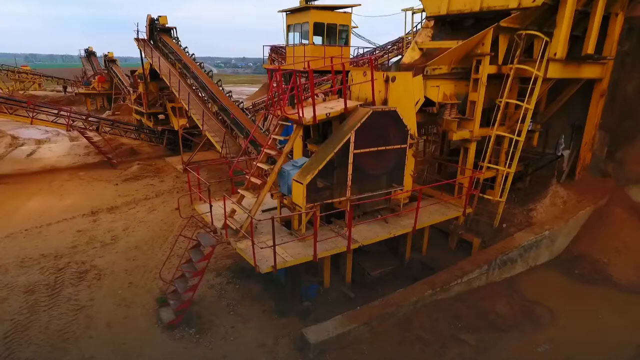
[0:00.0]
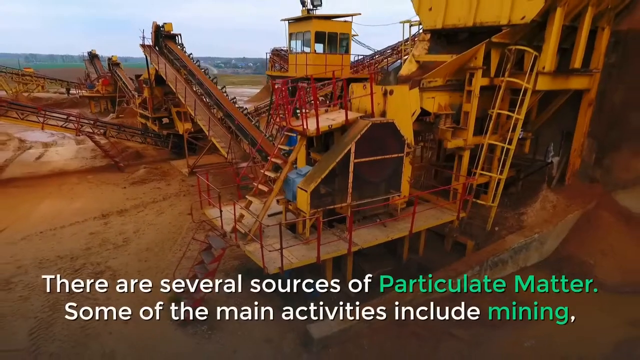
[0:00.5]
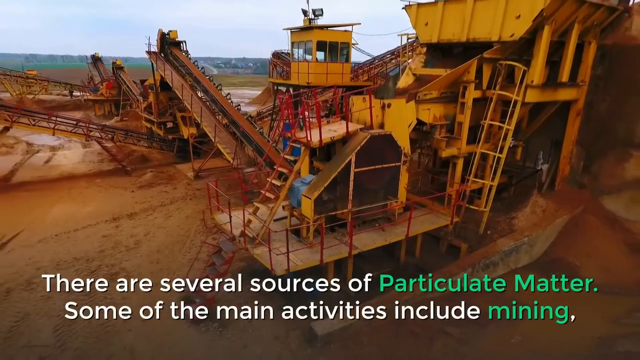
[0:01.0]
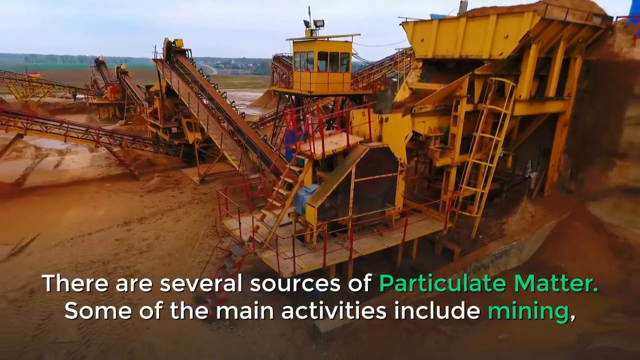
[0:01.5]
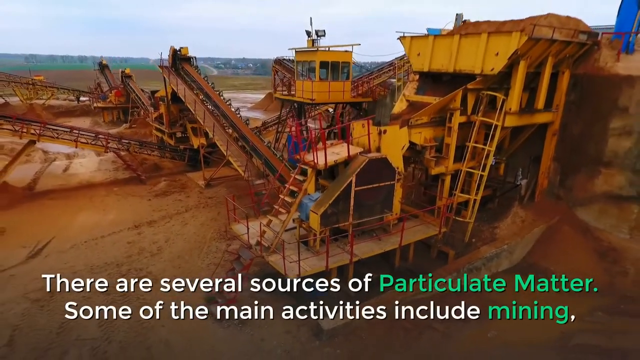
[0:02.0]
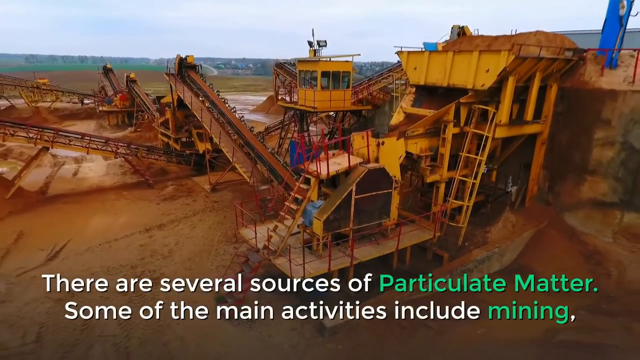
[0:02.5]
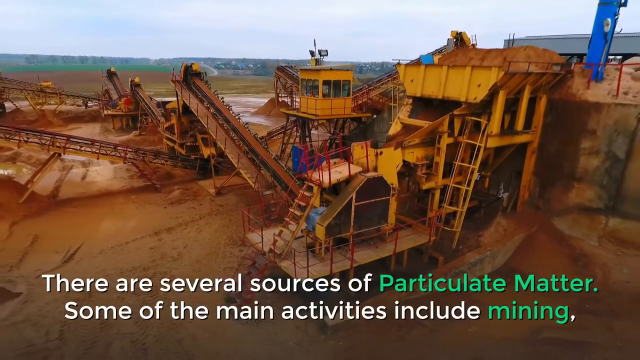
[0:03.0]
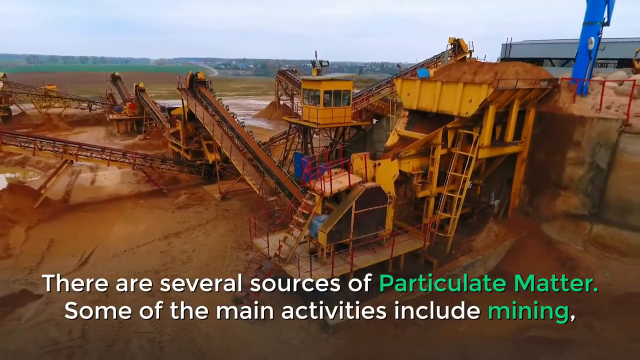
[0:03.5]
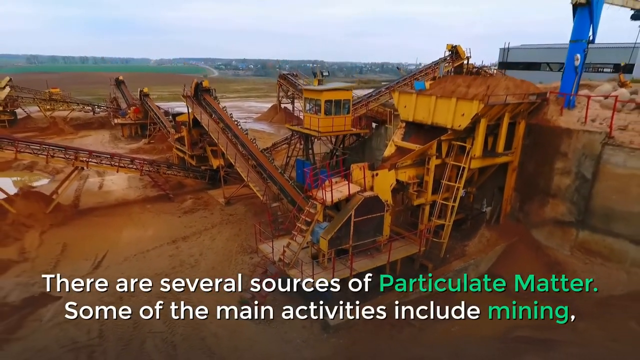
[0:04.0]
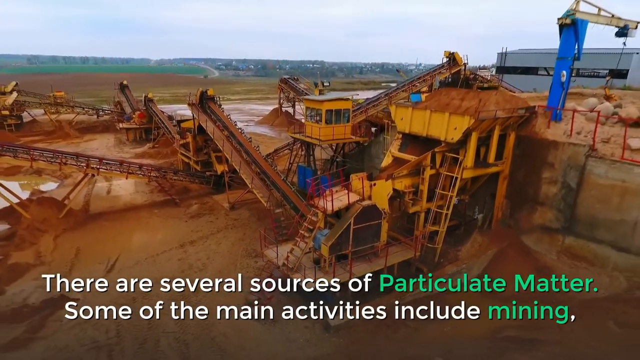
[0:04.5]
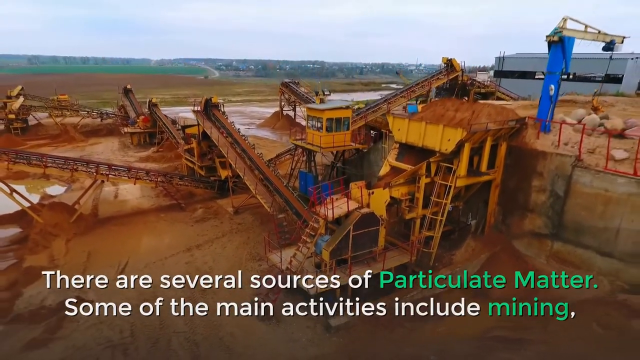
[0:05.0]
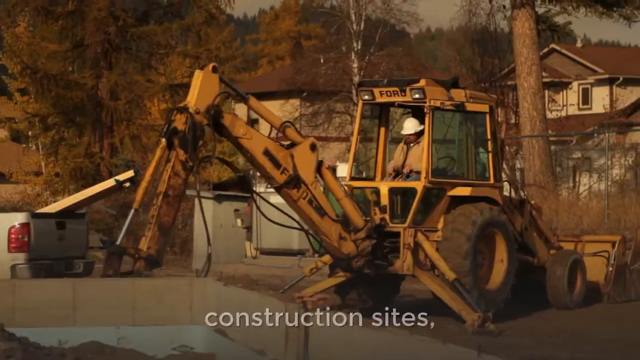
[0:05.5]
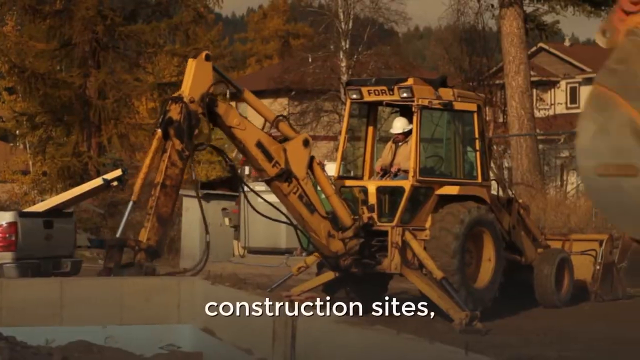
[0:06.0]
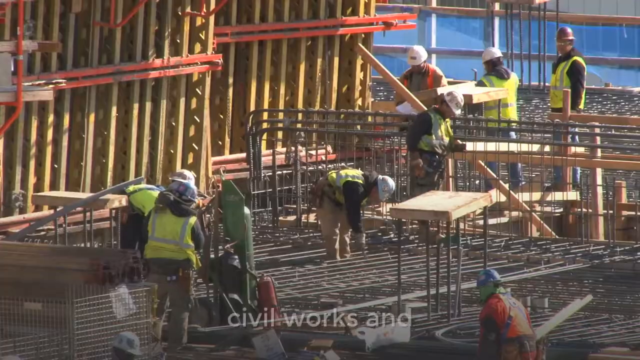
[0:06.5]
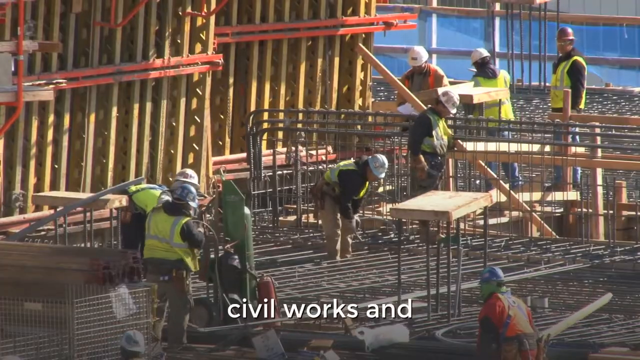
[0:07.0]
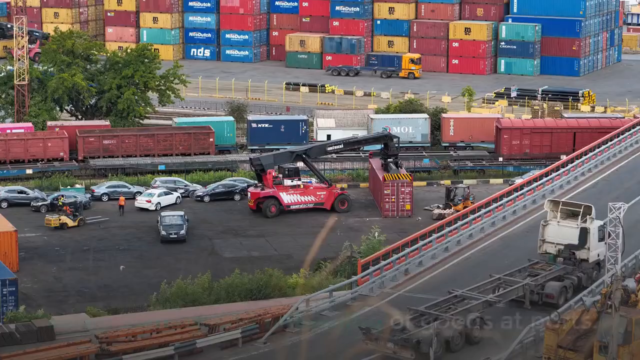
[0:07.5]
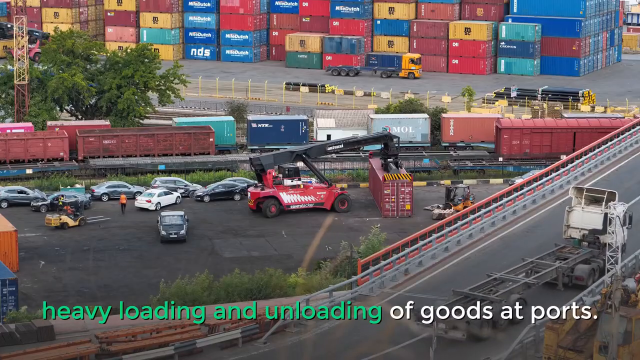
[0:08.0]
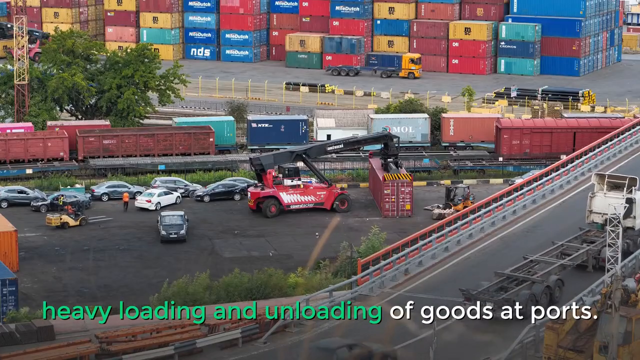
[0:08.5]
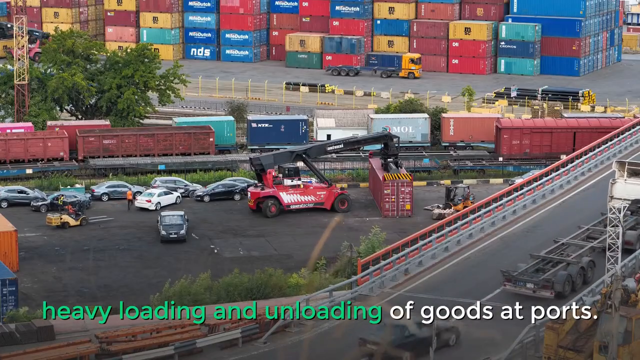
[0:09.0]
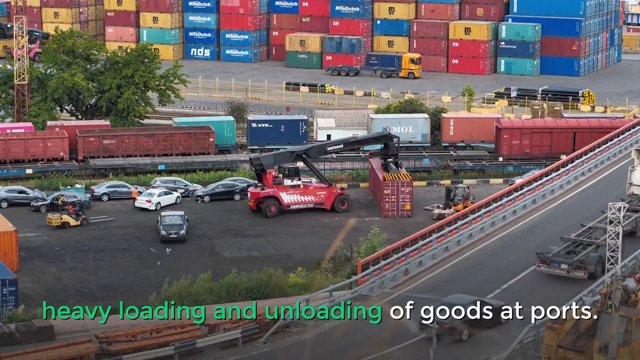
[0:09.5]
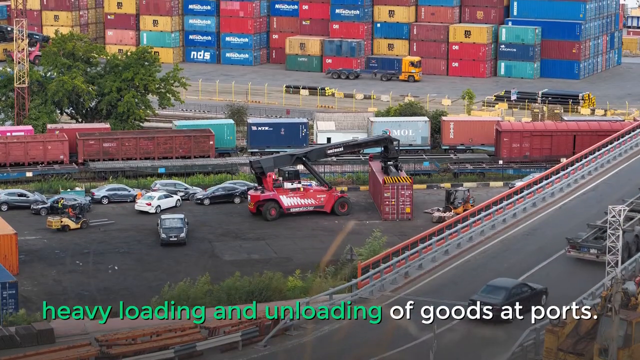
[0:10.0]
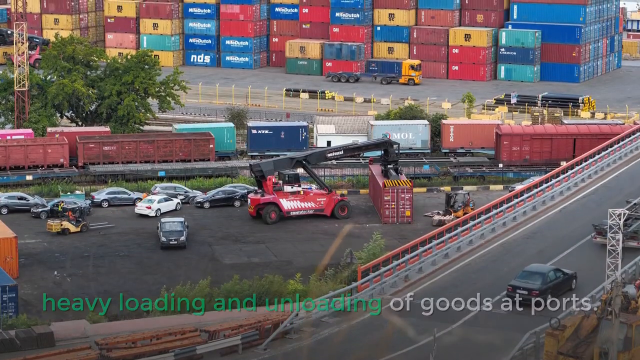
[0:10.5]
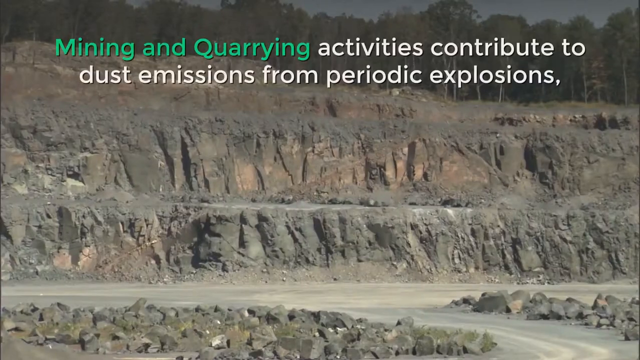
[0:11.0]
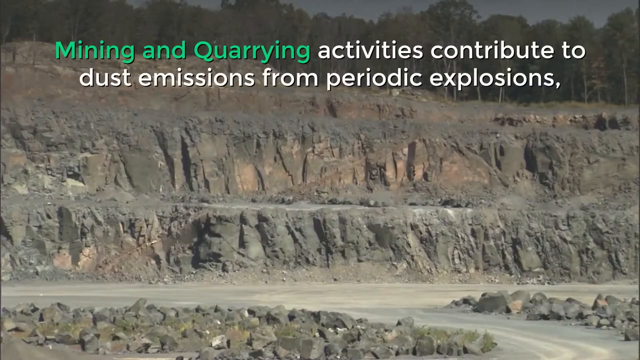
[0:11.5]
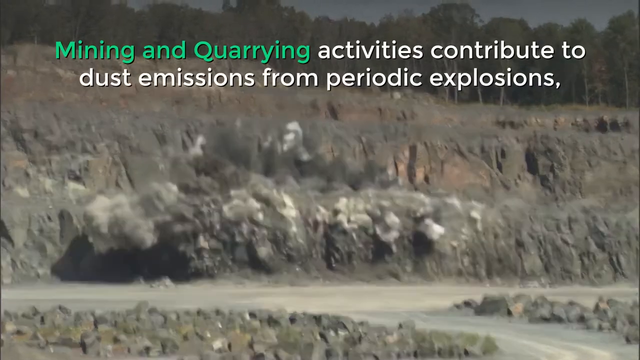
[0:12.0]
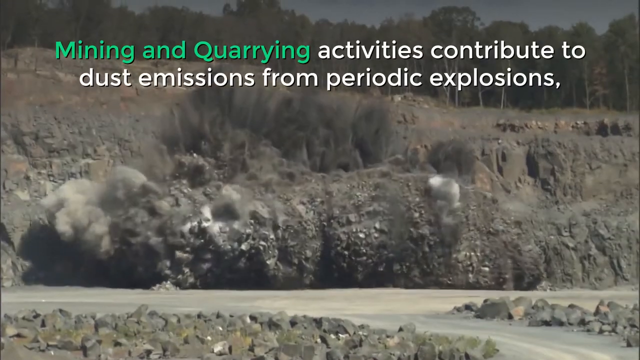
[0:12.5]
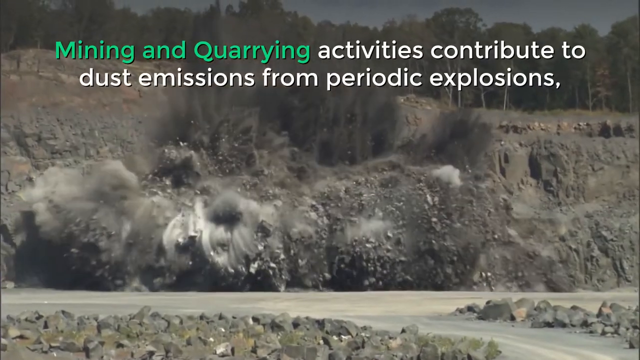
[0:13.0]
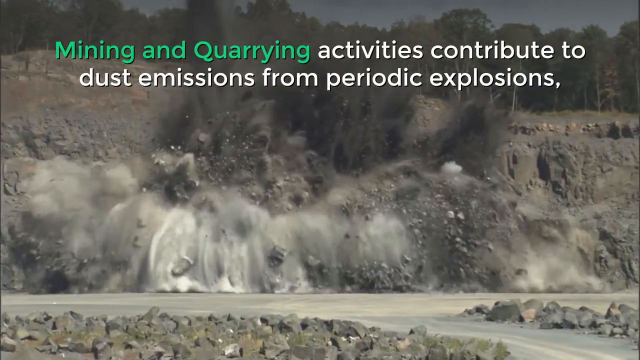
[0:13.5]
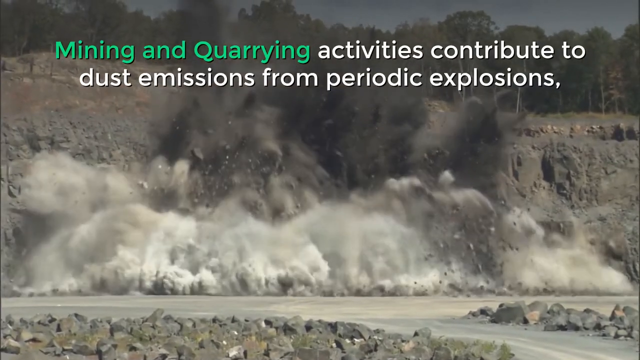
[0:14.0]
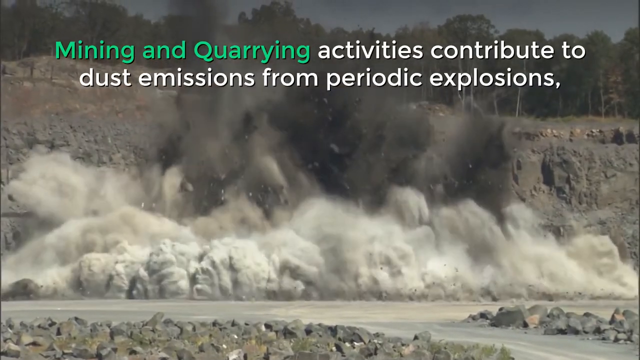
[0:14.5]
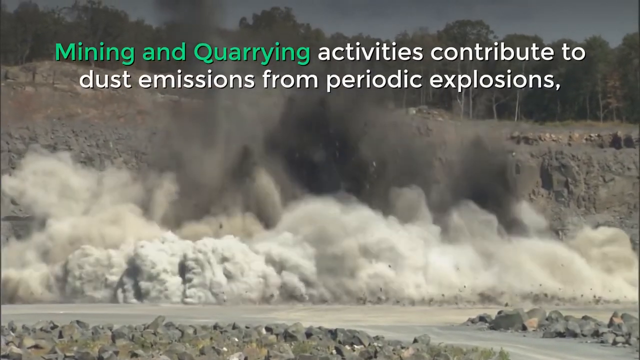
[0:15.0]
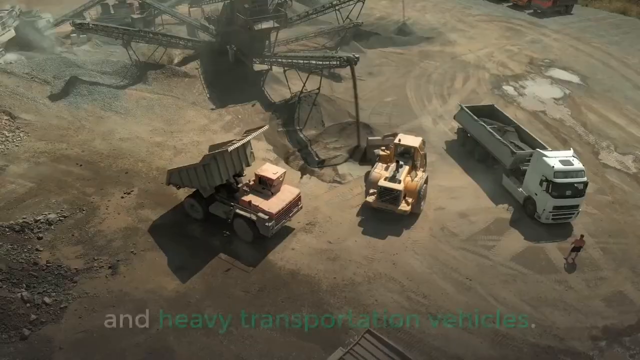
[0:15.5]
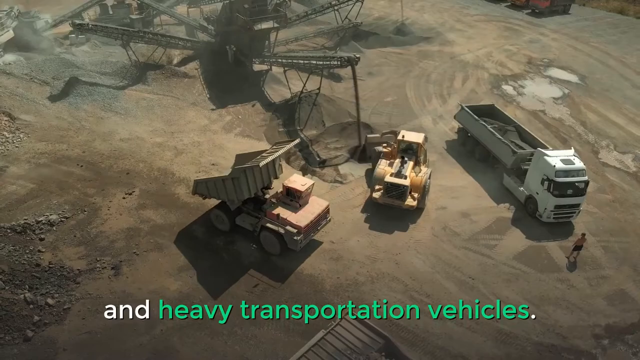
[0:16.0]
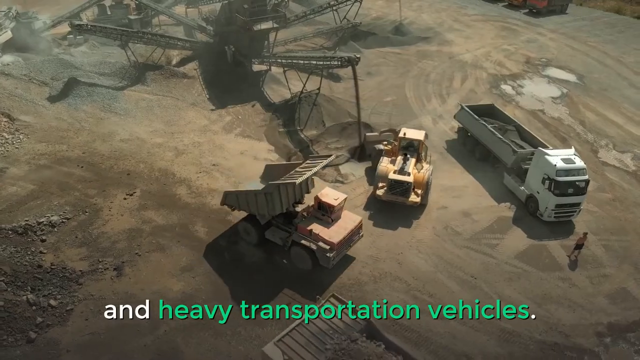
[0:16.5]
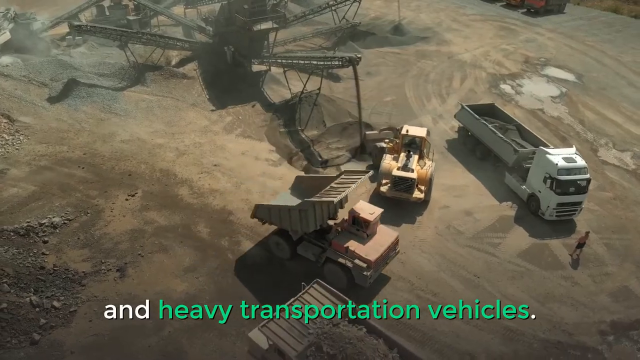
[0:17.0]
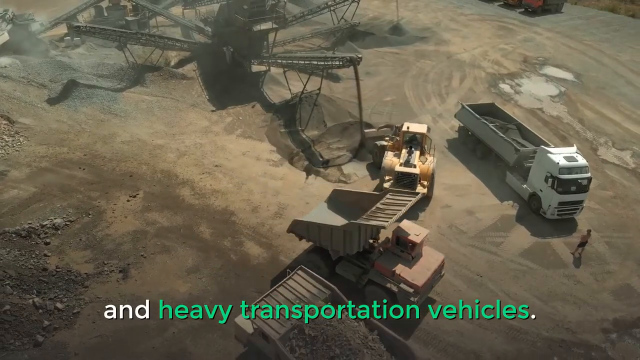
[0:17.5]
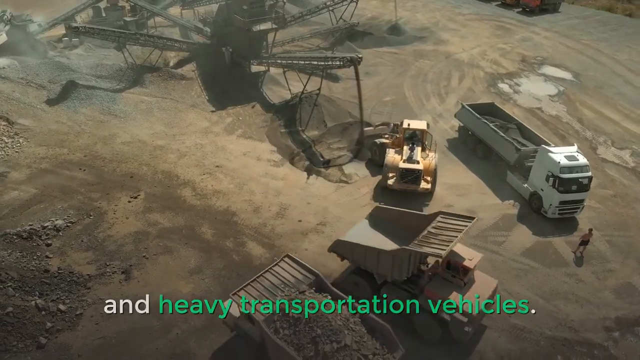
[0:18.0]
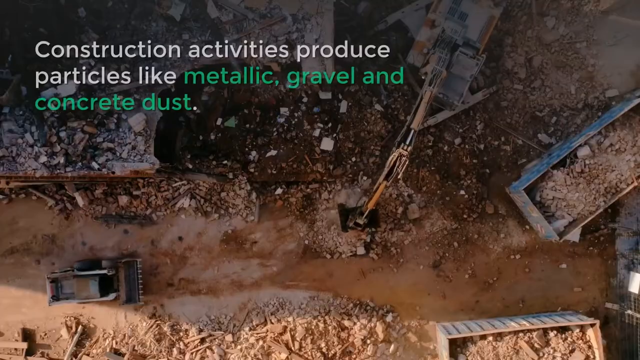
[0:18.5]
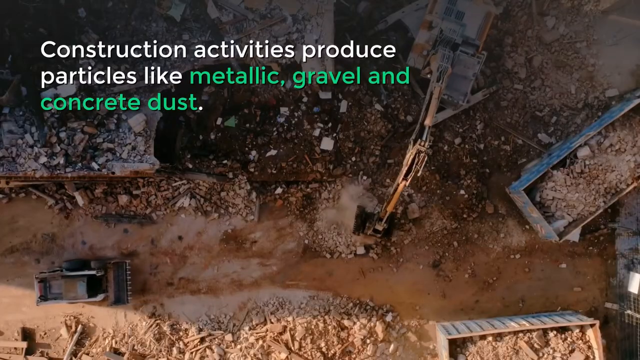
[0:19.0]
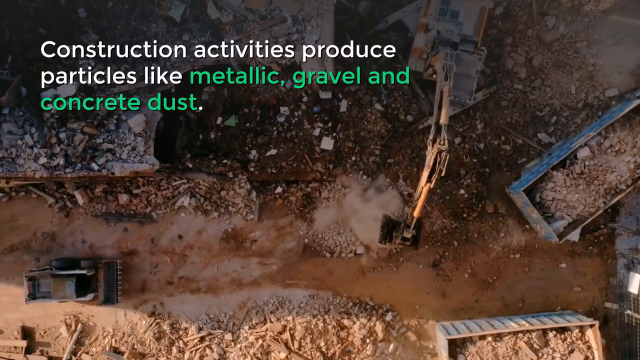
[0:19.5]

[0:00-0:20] The video opens on what looks like a factory, possibly some sort of quarry, maybe a gold mining operation. A big outdoor structure with several belts and ladders appears to be digging into the earth. The camera pulls away from the factory, up into the air, as a lower third appears at the bottom of the screen reading 'there are several sources of particulate matter. Some of the main activities include mining'. Next comes what is apparently a backhoe, with a person in a heavy hard hat controlling it as it digs into the ground, and a lower third reads 'construction sites'. The video cuts to several construction workers in reflective vests who appear to be working on some sort of structure; there are steel bars and what looks like wood and other assembled pieces. The workers, apparently seven of them, all wear hard hats, and a lower third at the bottom says 'civil works'. Then comes a shot of what looks like a shipping port, with many cargo boxes in the background and, in the foreground, some parked cars and a large vehicle with an arm on the front that can pick up the boxes, possibly putting them on a train; there appear to be train tracks. The lower third reads 'heavy loading and unloading of goods at ports'. Next, what looks like rock is exploded, with a title reading 'mining and quarrying activities contribute to dust emissions from periodic explosions', and the dust settles. An overhead shot shows dump trucks and other large vehicles moving around some sort of construction or excavation site, with belts carrying some sort of material up and pouring it off onto the ground; a lower third reads 'and heavy transportation vehicles'. Another bird's-eye shot shows what looks like a construction site, with what looks like another backhoe scooping up material, a bulldozer backing up, and the bed of a large truck holding a lot of the material. A title reads 'construction activities produce particles like metallic gravel and concrete dust'.